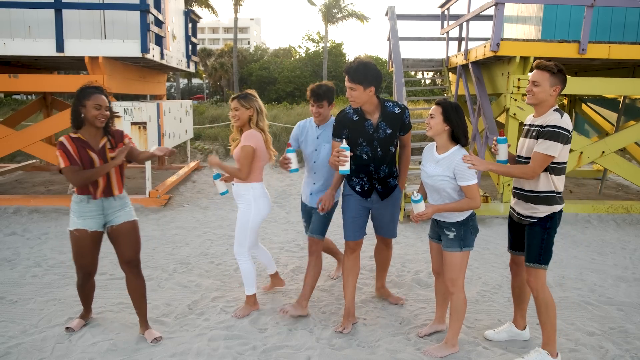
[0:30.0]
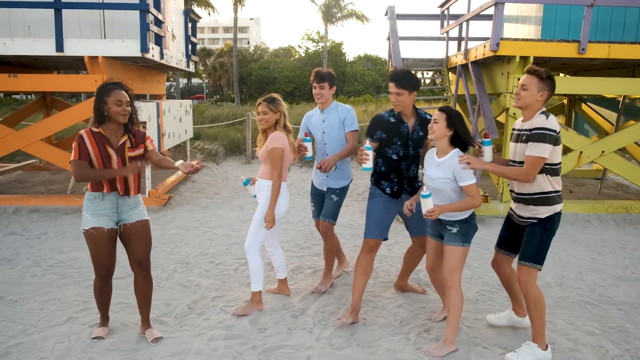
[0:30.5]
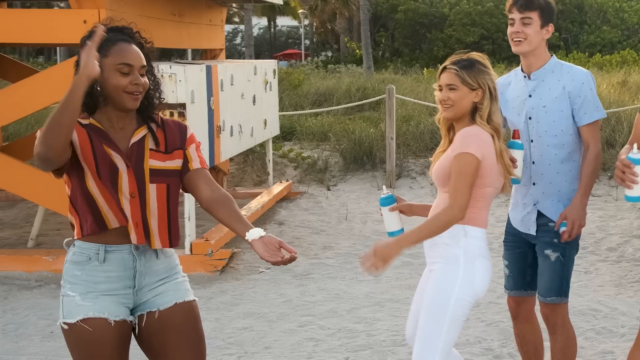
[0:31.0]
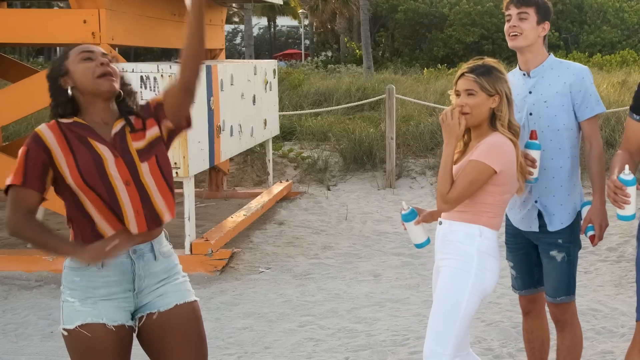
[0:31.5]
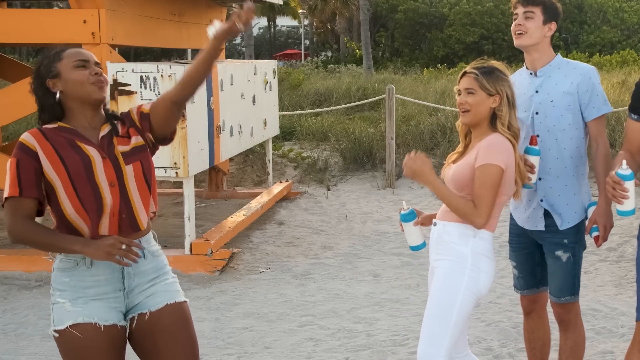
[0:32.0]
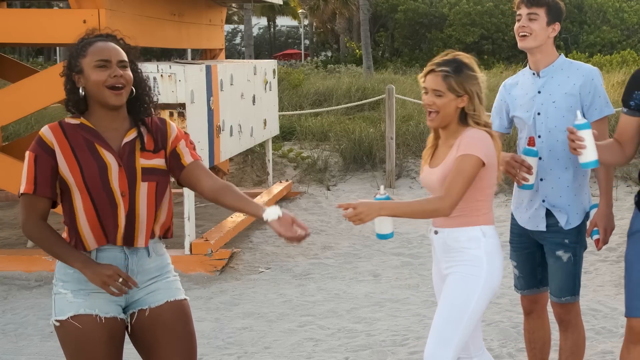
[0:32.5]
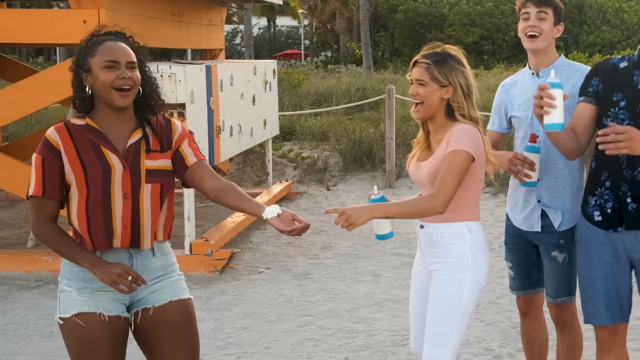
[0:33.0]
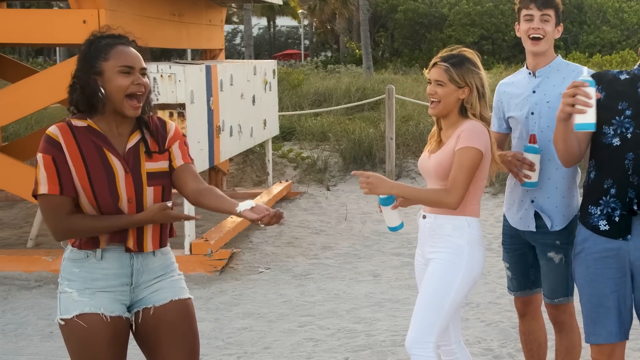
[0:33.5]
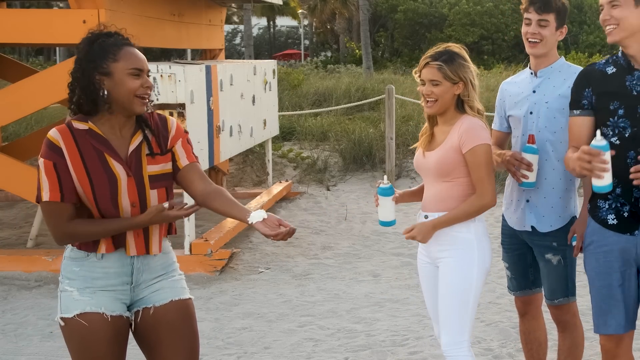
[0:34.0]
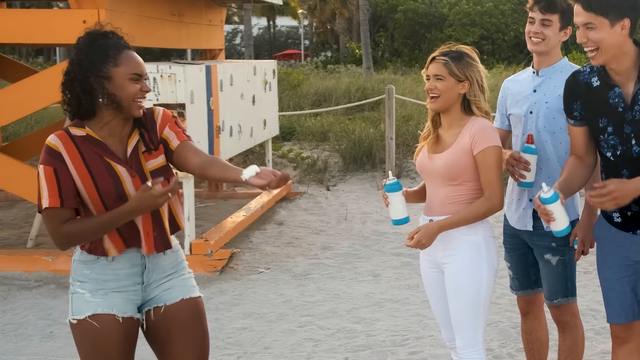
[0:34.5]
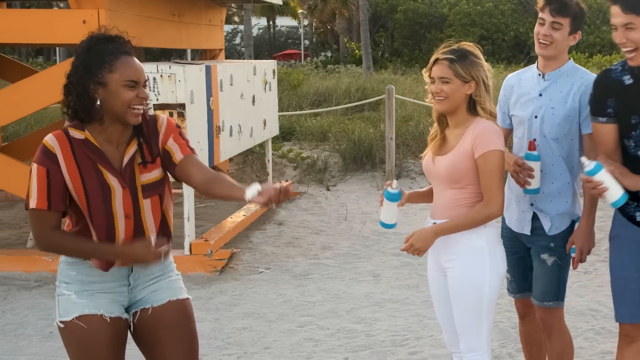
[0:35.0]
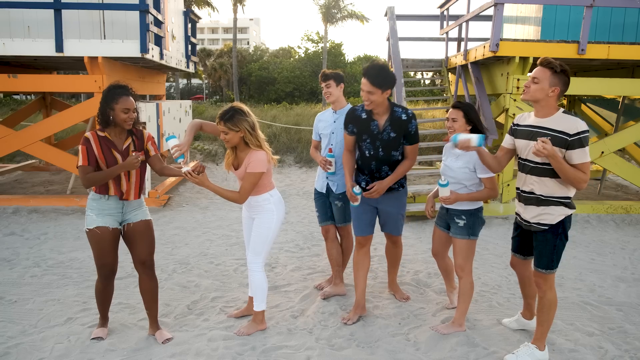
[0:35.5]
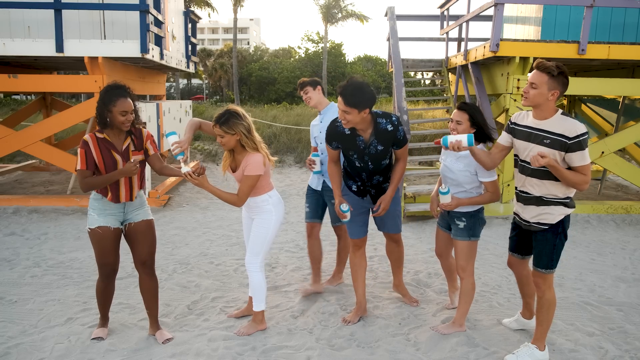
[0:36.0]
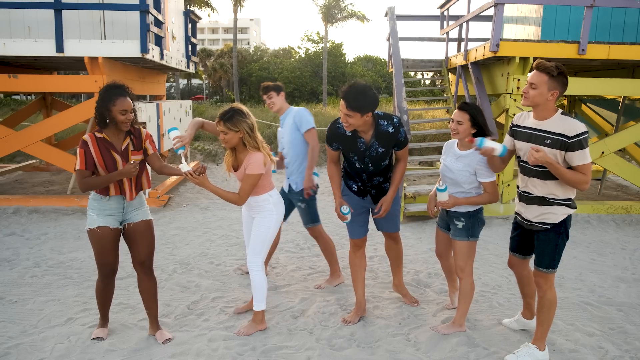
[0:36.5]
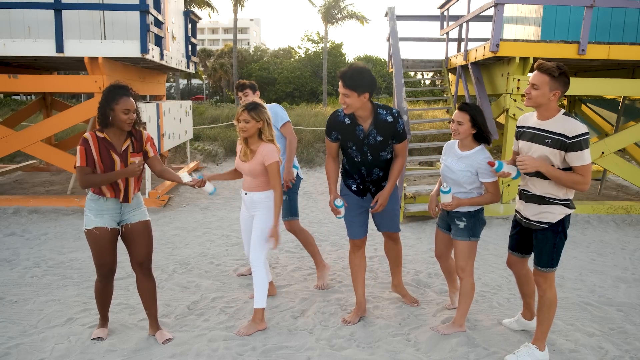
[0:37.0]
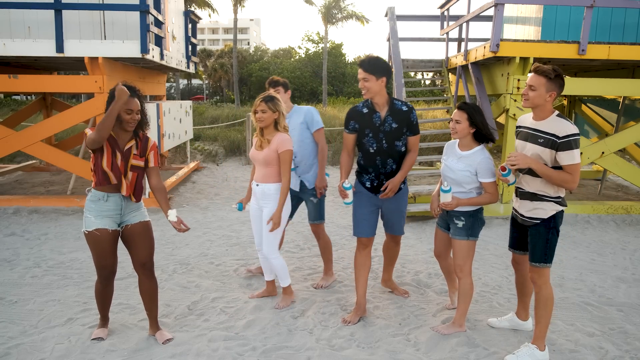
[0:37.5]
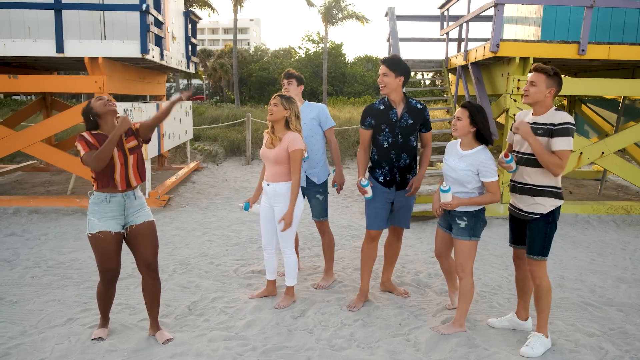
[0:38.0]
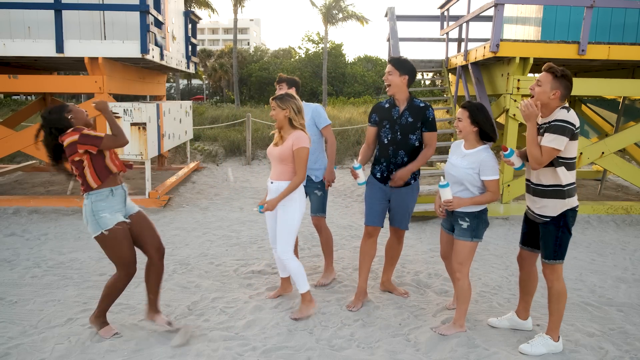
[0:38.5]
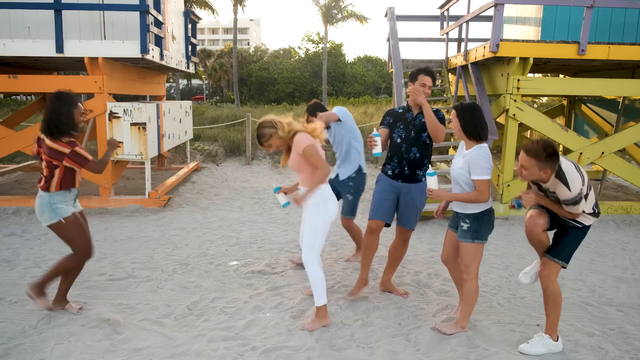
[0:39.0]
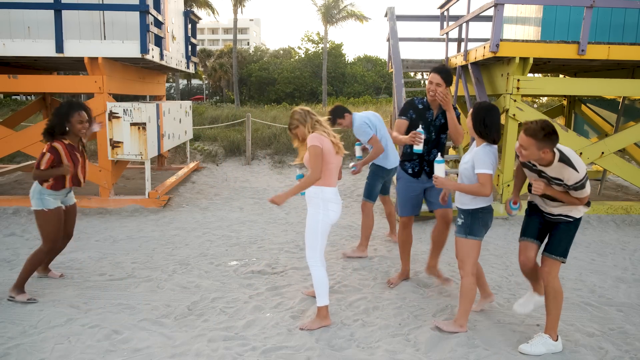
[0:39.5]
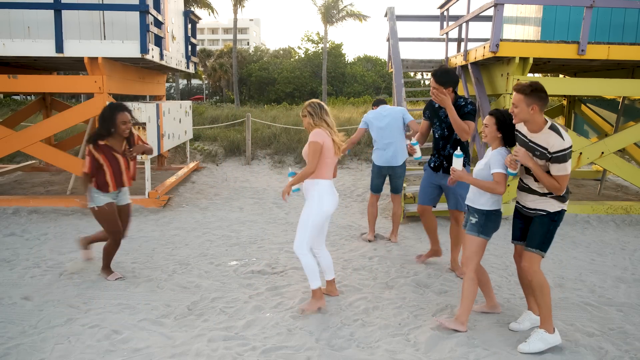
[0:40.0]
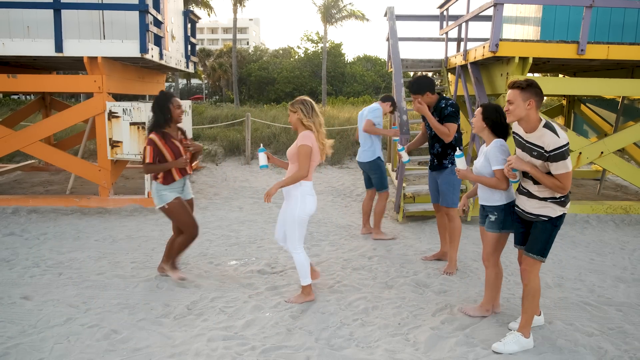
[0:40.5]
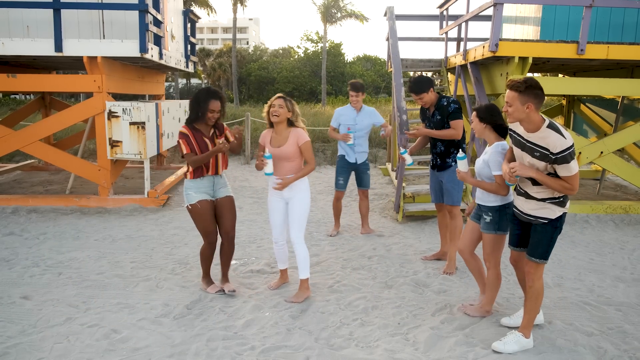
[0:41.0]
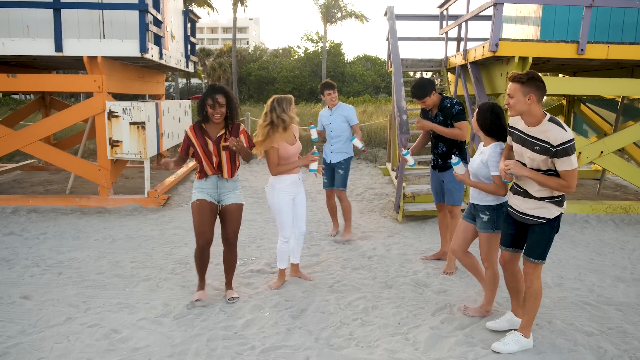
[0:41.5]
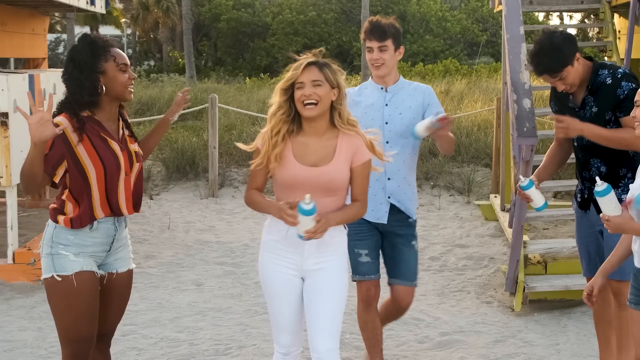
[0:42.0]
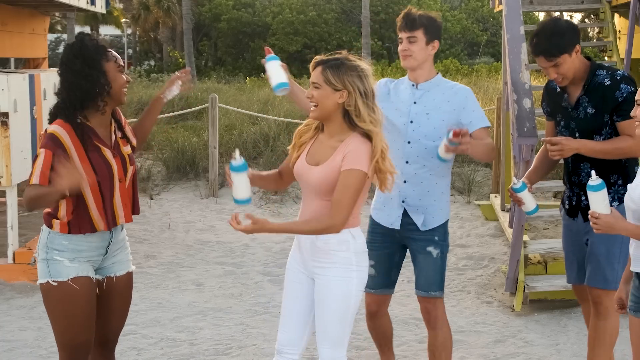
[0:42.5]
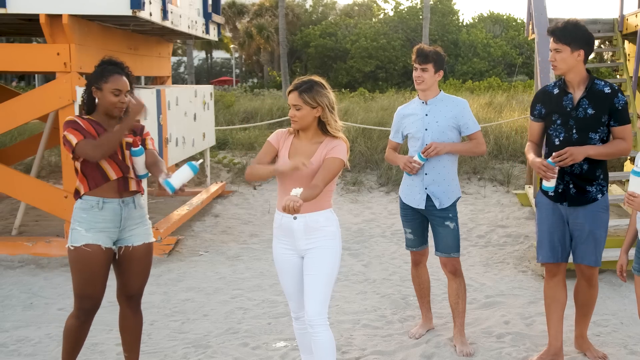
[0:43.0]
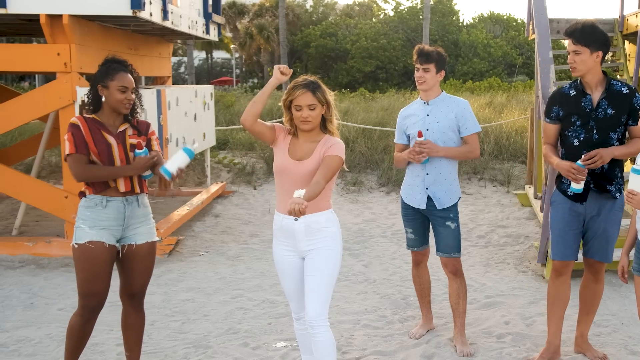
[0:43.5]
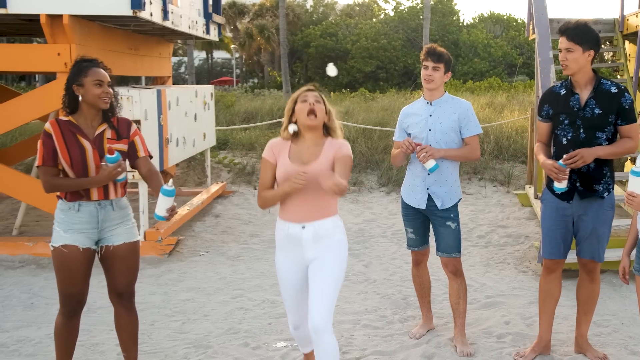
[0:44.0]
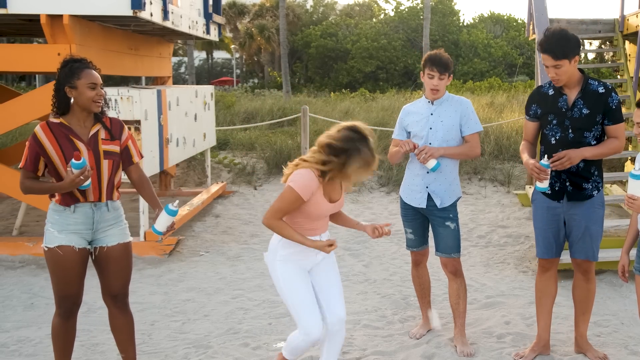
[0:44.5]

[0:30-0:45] Jojo demonstrates the challenge to the four participants. With her arm extended and whipped cream on the inside of her wrist, she raises her arm and at the same time hits her forearm with her other hand to stop it rising. The first time it doesn't really work, as the whipped cream doesn't even look like it came off her arm, so Chachi puts more whipped cream on Jojo's arm. Jojo tries again, raising her arm and stopping it with her other hand, and this time the whipped cream flies off and onto the sand. Then Chachi tries: she puts whipped cream on her arm, raises it and stops it, and the whipped cream flies just a very short distance straight up and onto the sand as the others watch and laugh.